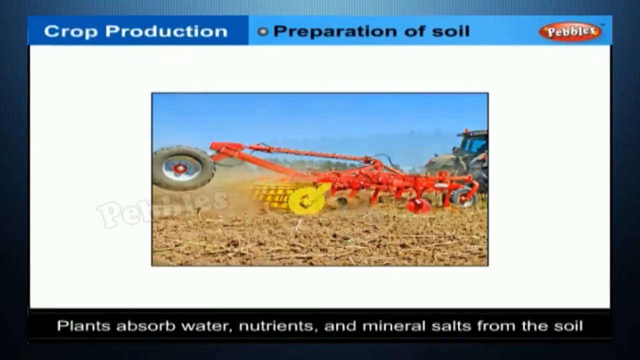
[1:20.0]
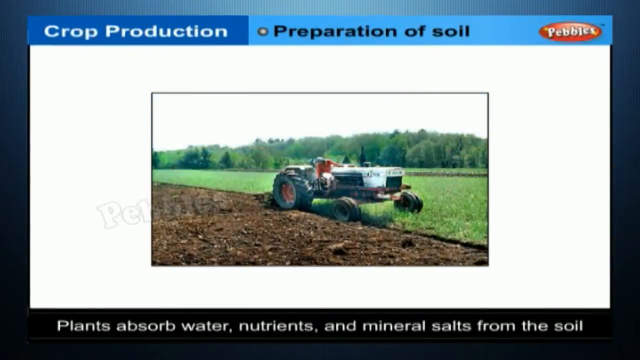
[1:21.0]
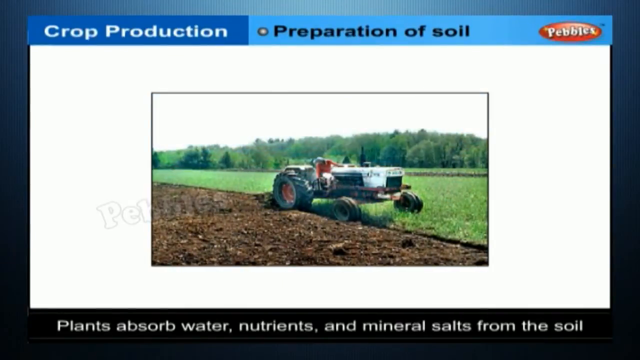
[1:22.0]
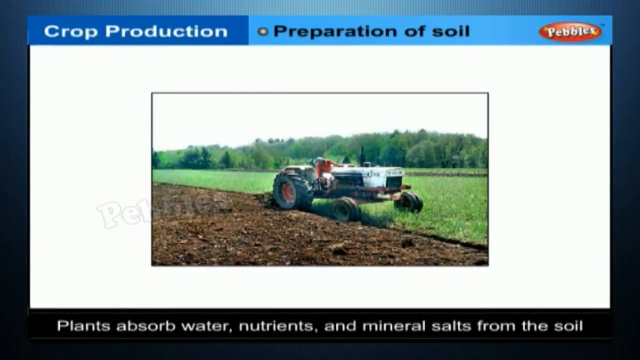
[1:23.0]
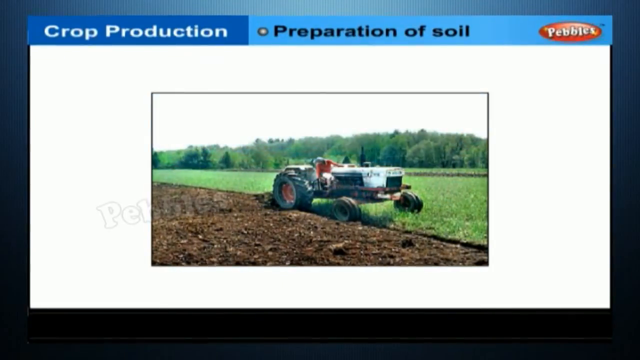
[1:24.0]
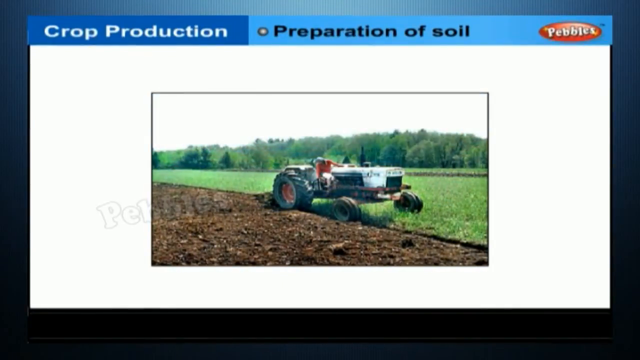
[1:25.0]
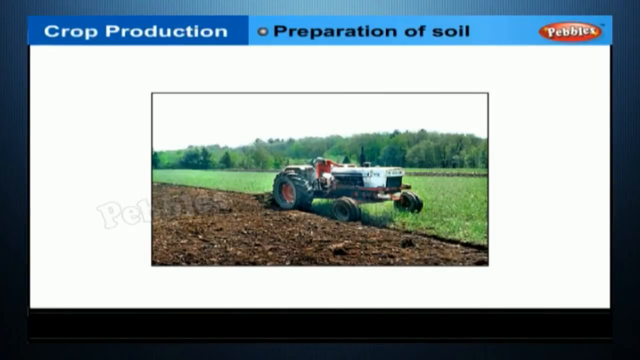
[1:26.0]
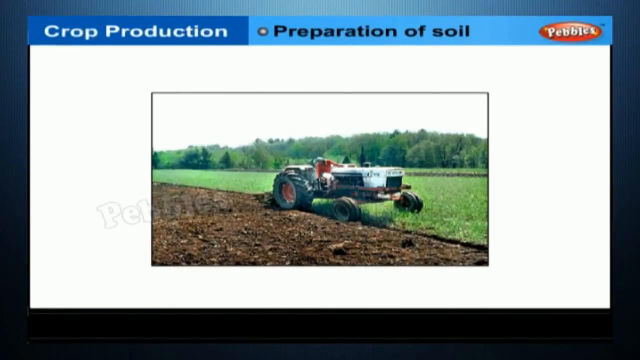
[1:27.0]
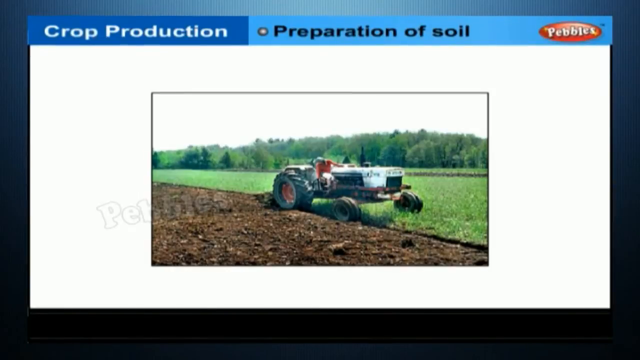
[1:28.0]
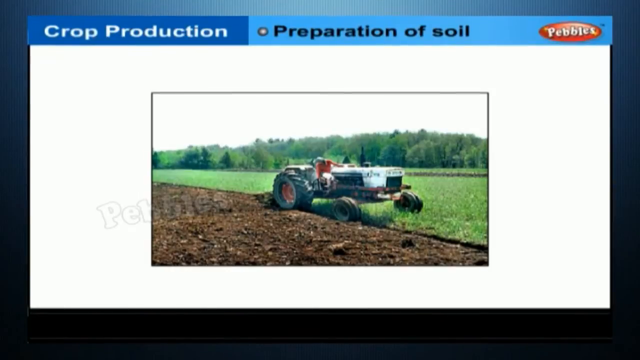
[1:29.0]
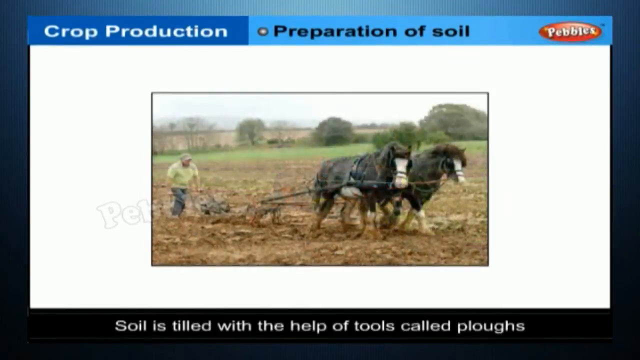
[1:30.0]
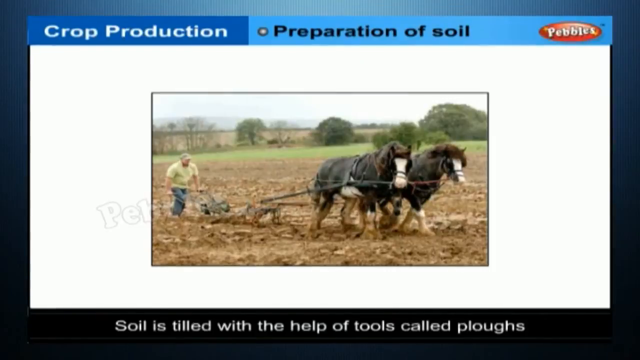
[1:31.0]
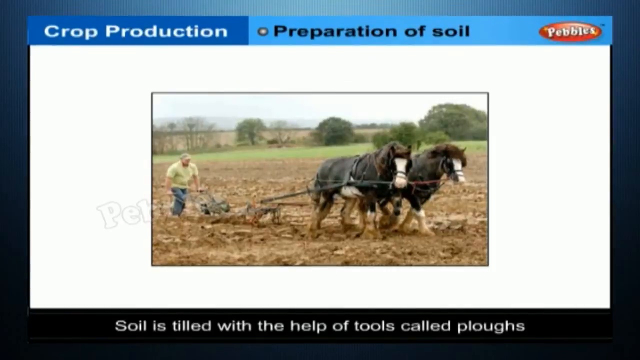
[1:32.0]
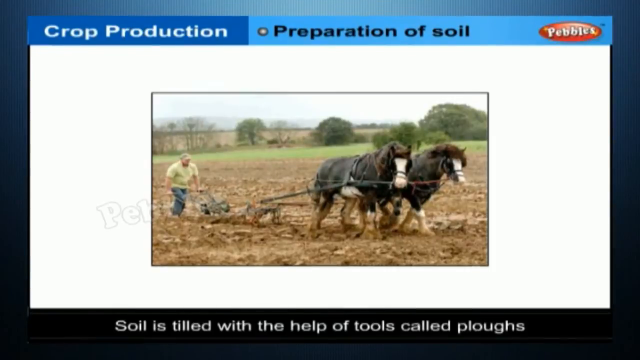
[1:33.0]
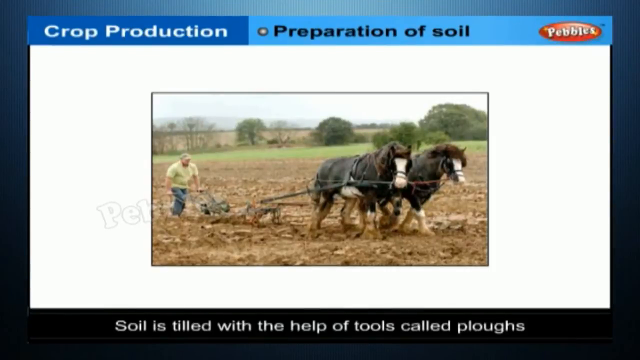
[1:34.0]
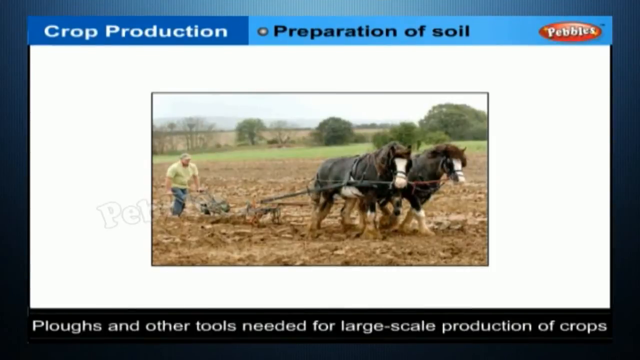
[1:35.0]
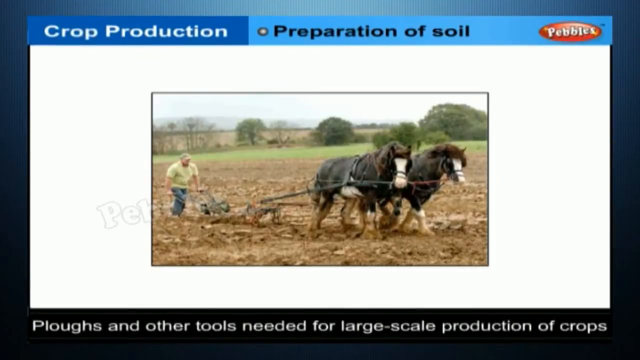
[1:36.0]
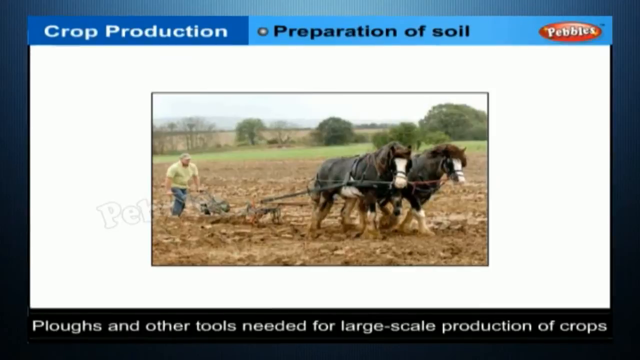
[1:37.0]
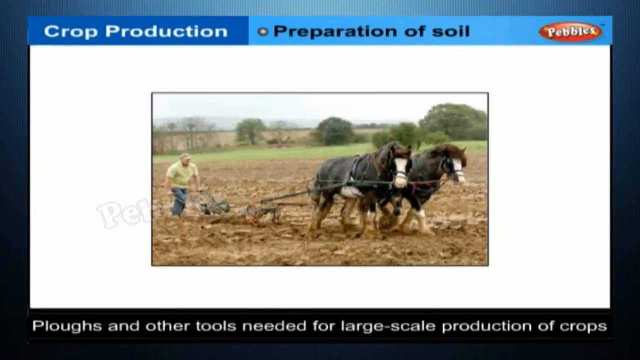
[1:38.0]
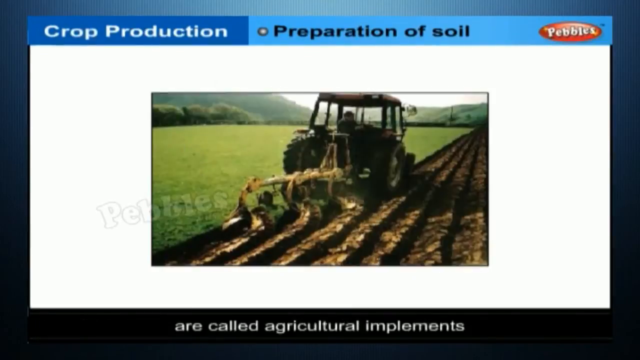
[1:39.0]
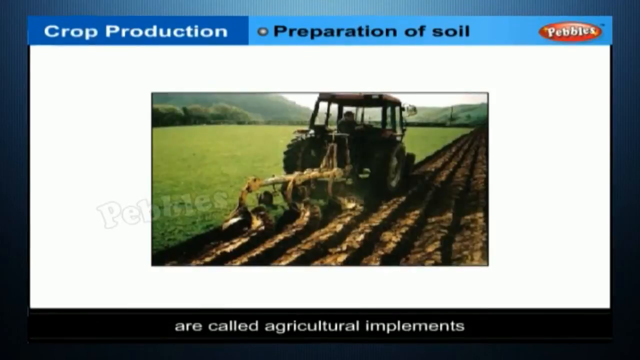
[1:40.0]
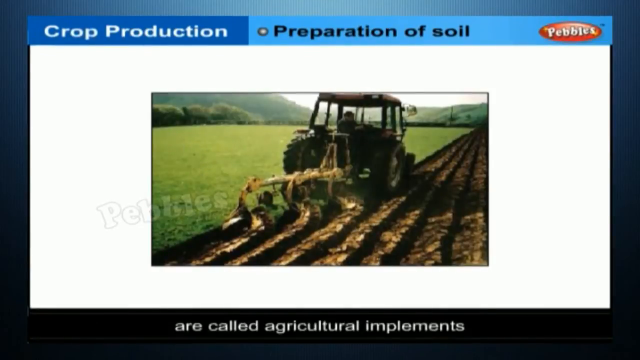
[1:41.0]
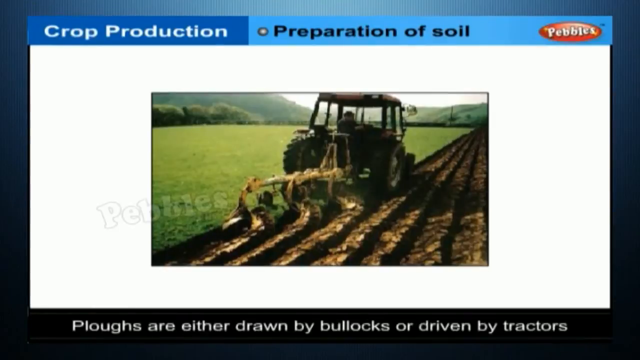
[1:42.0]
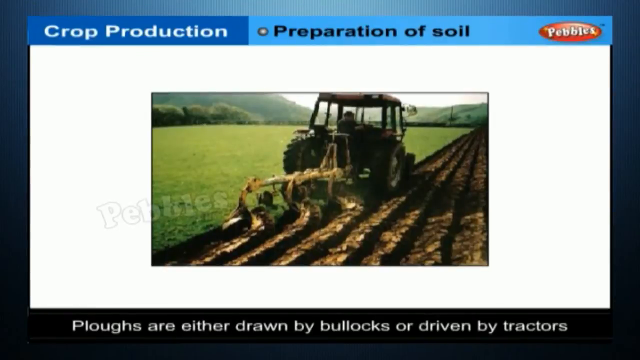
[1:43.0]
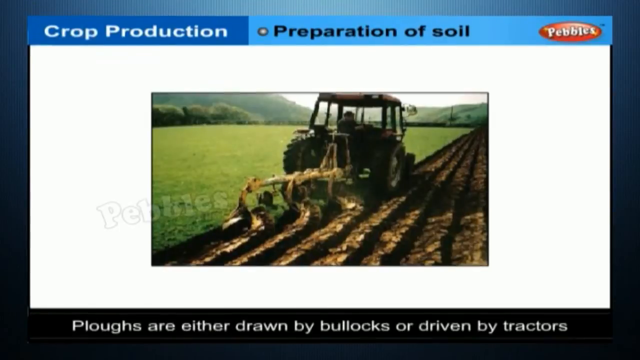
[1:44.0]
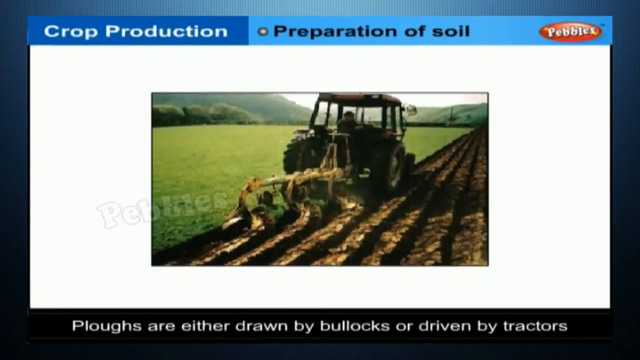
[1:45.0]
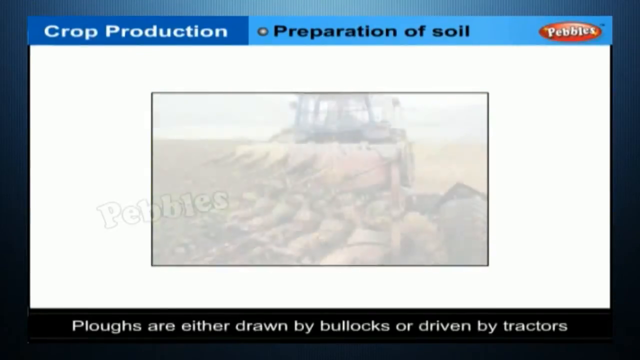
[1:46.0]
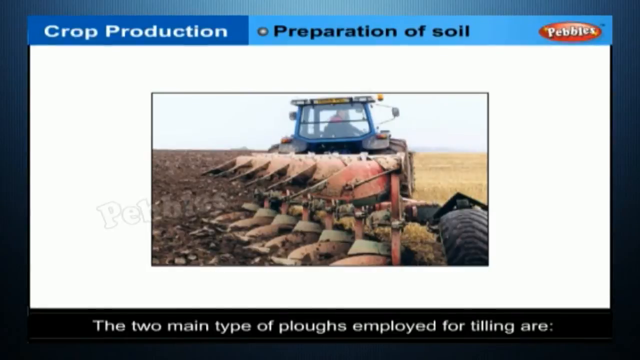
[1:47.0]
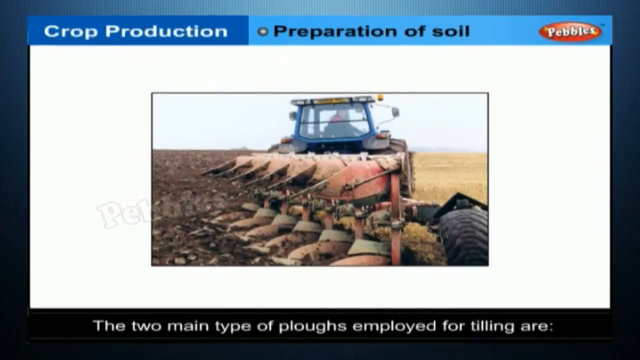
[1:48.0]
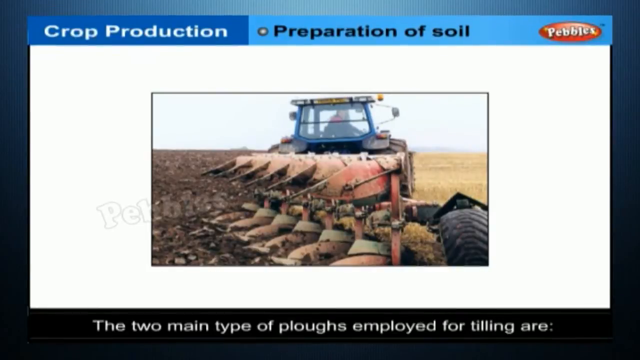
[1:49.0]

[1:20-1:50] The crop production video continues with the preparation of soil section and the picture of the red plough, with the caption at the bottom of the screen reading "Plants absorb water, nutrients and mineral salts from the soil." The image changes to an old-fashioned looking tractor with a plough blade behind it furrowing the soil, with soil on the left-hand side of the image, grass on the right and trees in the background. The tractor driver bends down to look at the soil below. A traditional image follows of a pair of shire horses pulling a plough, with the farmer steering from behind, and the ploughed field. The caption at the bottom reads "Soil is tilled with the help of tools called ploughs. Ploughs and other tools needed for large-scale production of crops are called agricultural implements." Another image shows furrows being made by a plough pulled by a tractor in a large field, with the grooves in the furrows visible. Text notes that ploughs are either drawn by bullocks or driven by tractors, and that the two main types of ploughs employed for tilling are wooden ploughs and iron ploughs, with examples shown on screen.